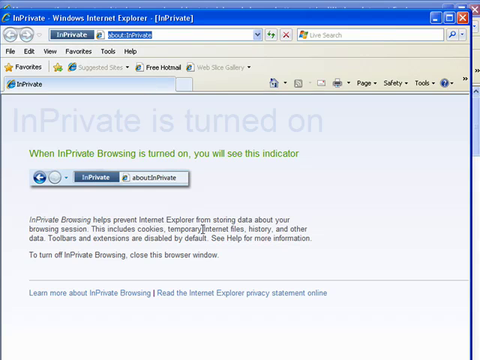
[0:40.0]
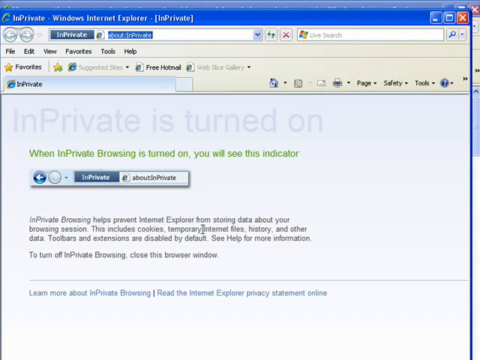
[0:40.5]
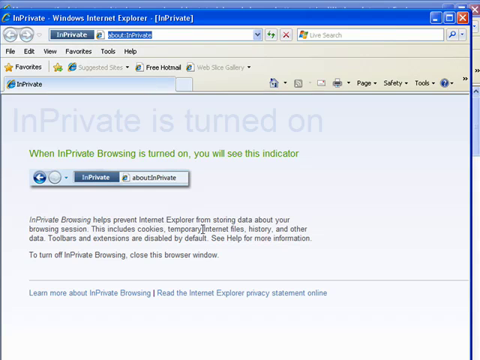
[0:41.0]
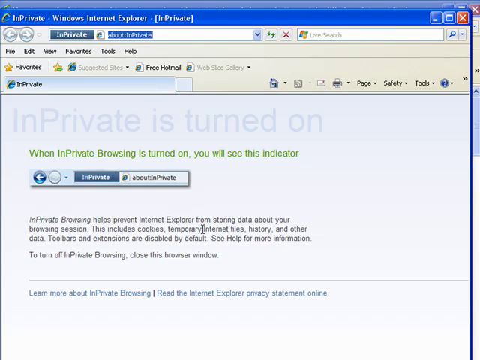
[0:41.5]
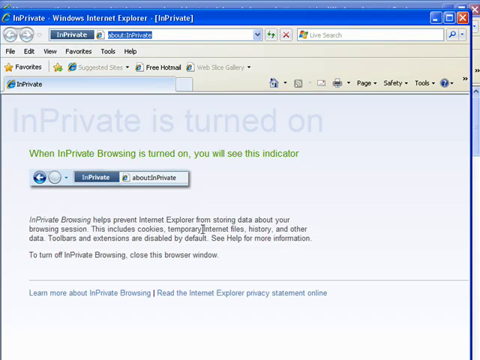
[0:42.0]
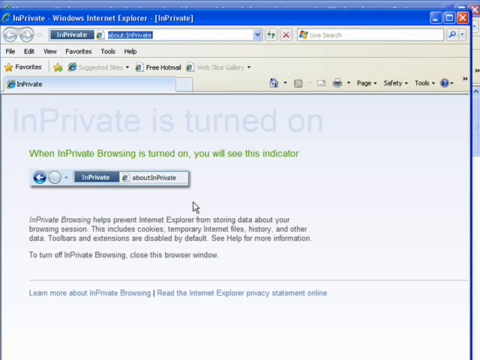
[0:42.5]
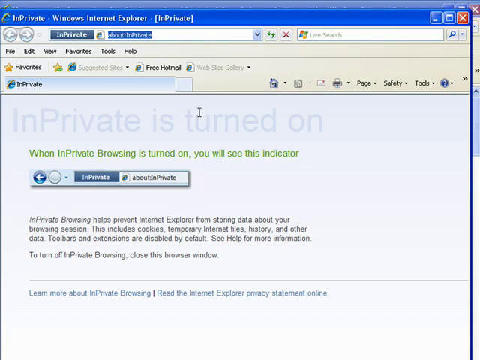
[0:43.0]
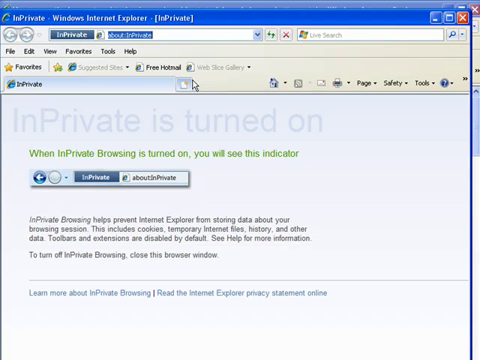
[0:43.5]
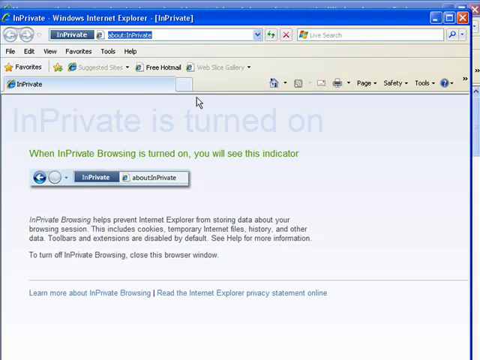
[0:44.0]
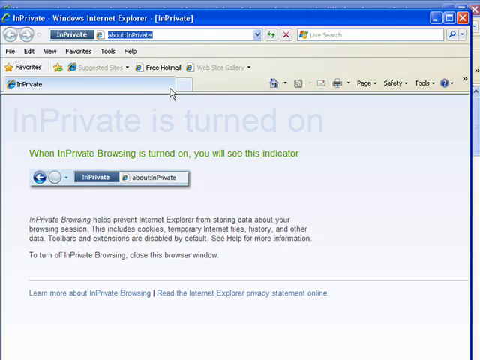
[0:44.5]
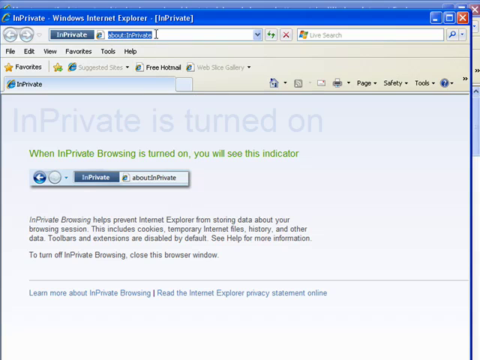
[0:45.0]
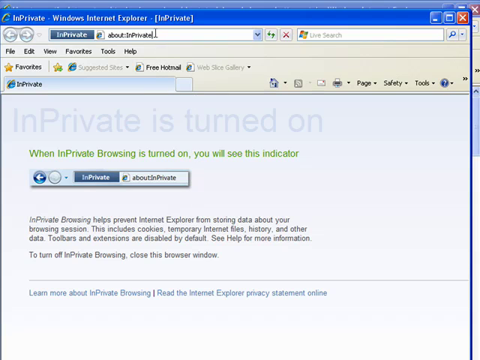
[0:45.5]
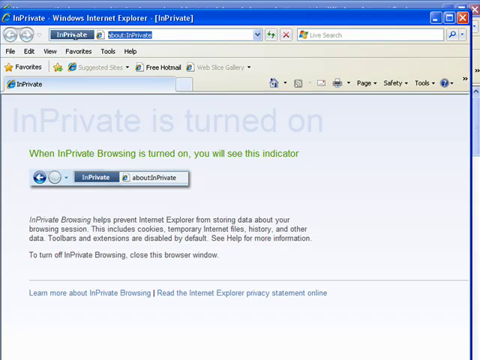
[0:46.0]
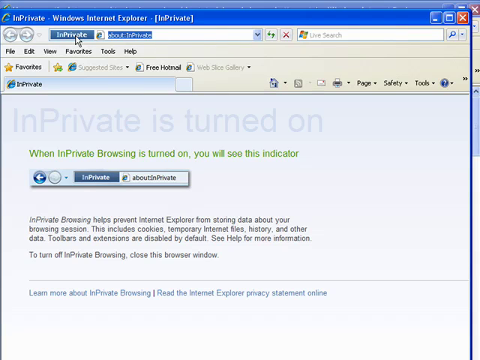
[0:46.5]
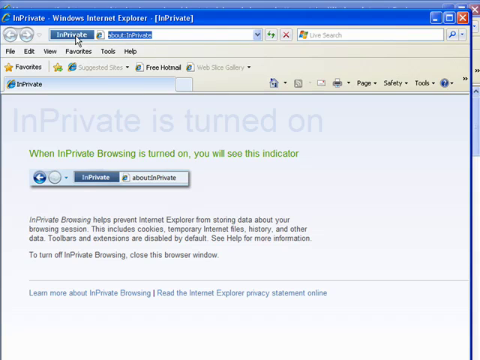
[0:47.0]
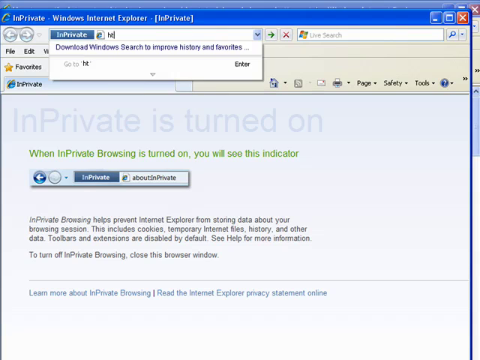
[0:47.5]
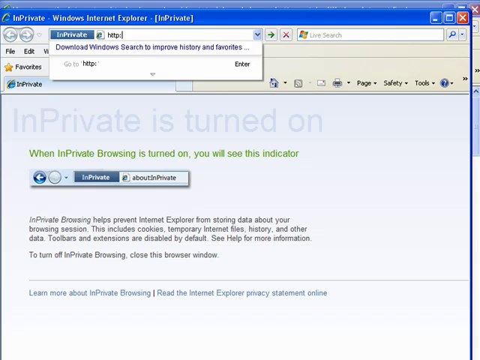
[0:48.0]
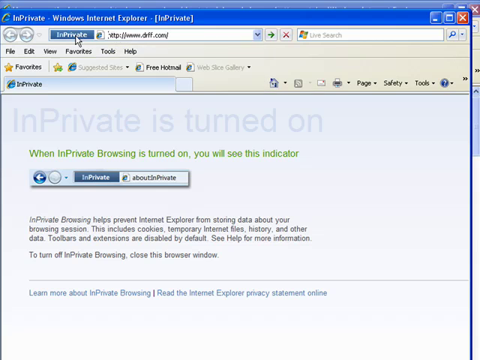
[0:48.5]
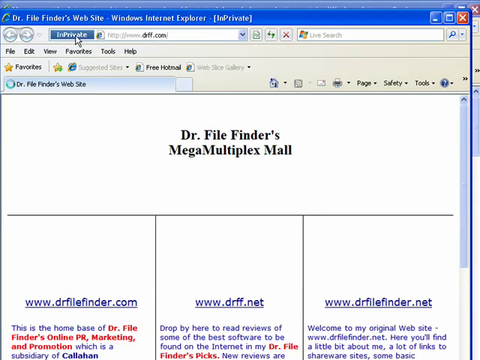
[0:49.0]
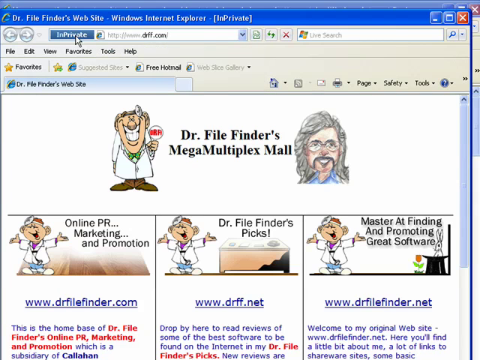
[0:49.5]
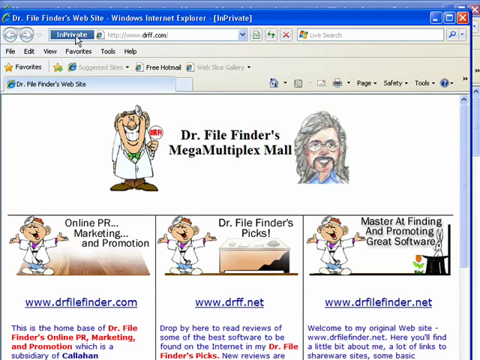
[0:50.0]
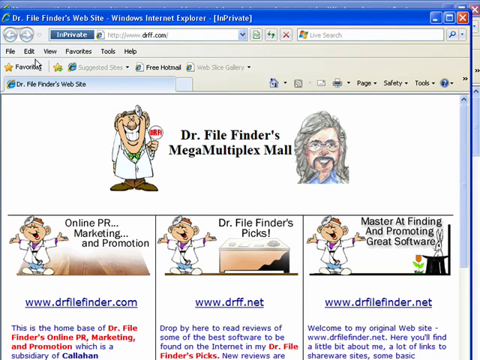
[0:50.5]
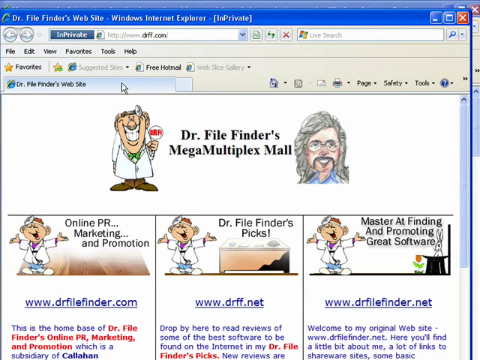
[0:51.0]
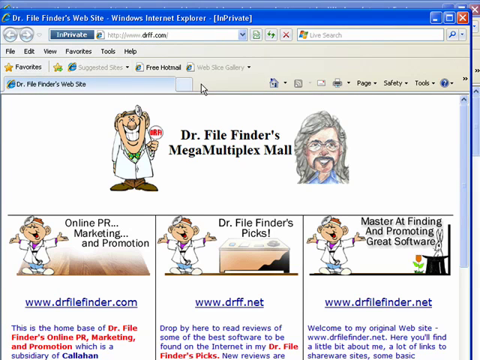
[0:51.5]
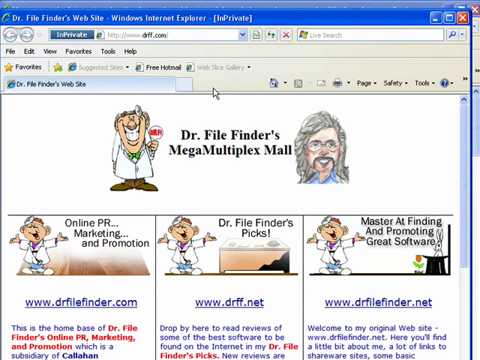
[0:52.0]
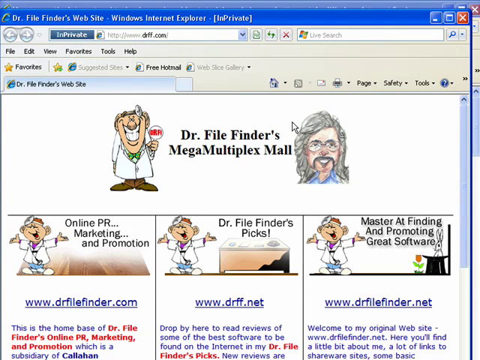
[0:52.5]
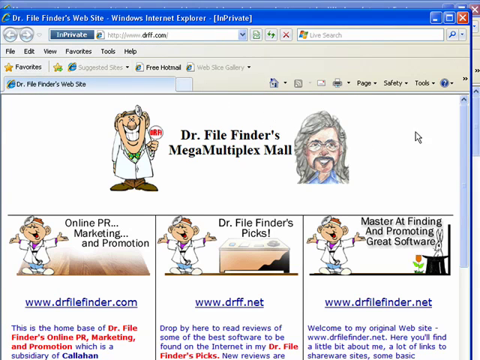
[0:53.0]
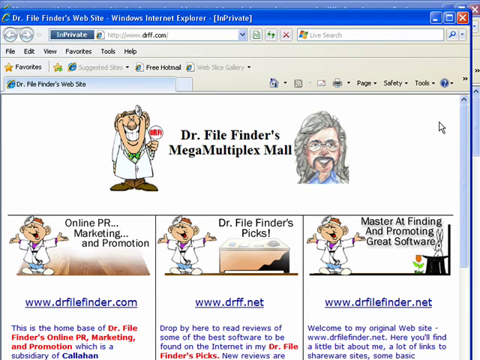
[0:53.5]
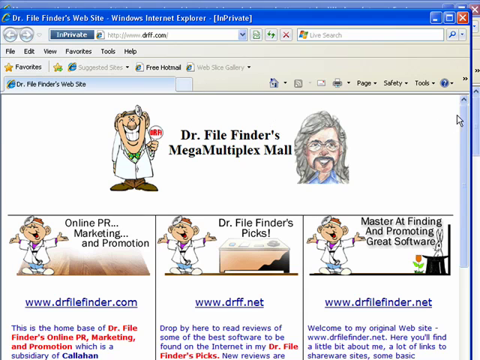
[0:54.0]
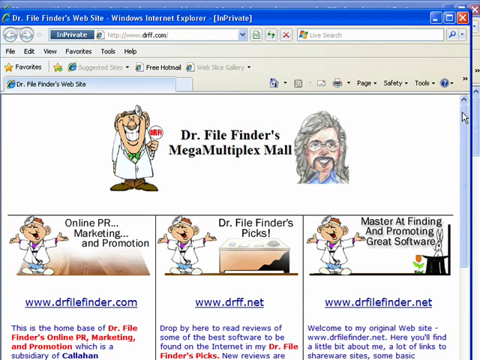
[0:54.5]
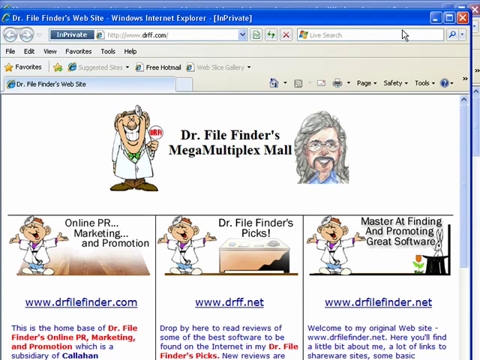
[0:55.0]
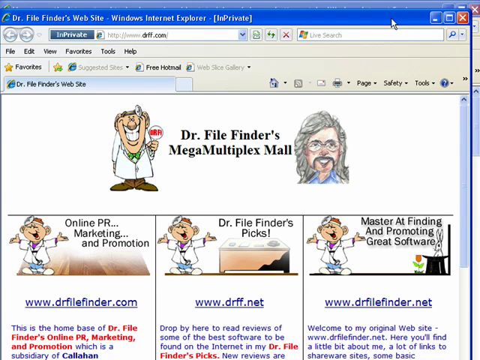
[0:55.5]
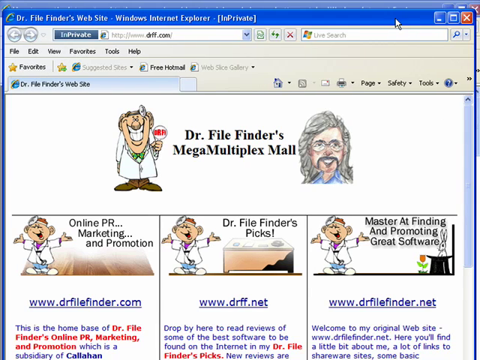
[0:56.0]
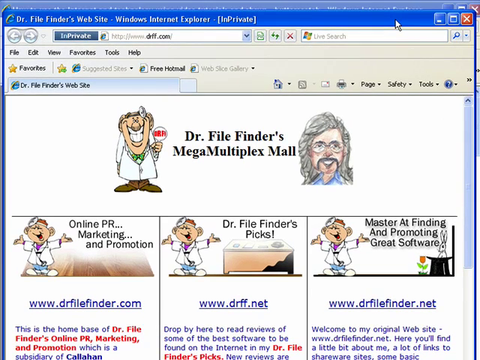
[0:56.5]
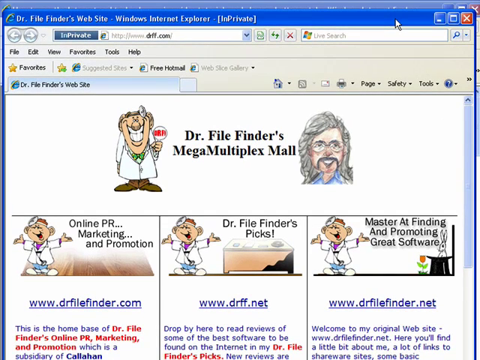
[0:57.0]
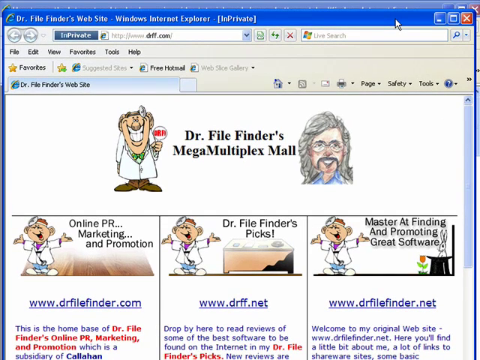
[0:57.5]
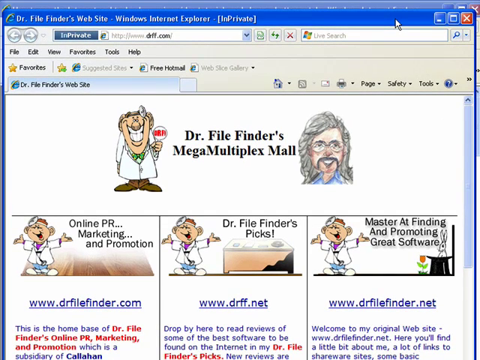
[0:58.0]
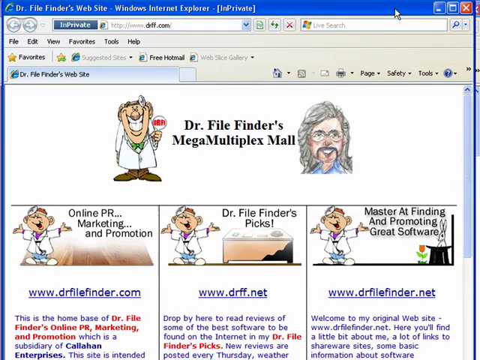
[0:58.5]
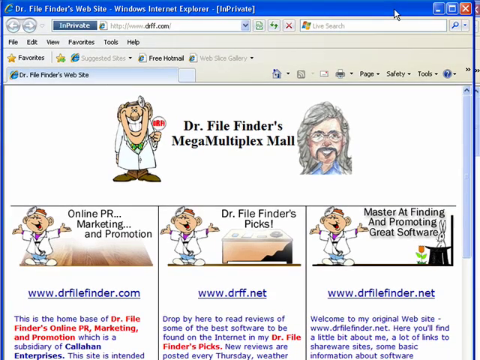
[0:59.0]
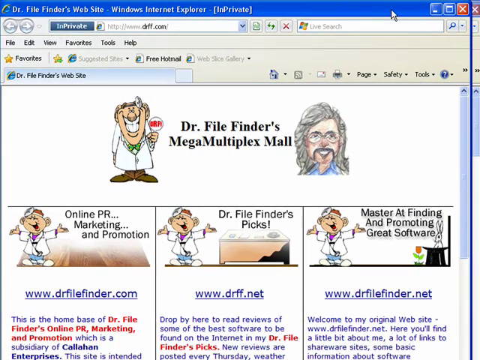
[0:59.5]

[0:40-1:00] In the InPrivate Windows Internet Explorer window, the web page reads "InPrivate is turned on." It says "When InPrivate browsing is turned on, you will see this indicator," next to a snippet of the top of the browser window showing a small "InPrivate" label. The page goes on: "InPrivate browsing helps prevent Internet Explorer from storing data about your browsing session. This includes cookies, temporary Internet files, history, and other data. Toolbars and extensions are disabled by default. See help for more information. To turn off InPrivate browsing, close this browser window." The cursor then goes up to the search bar and searches for drff.com.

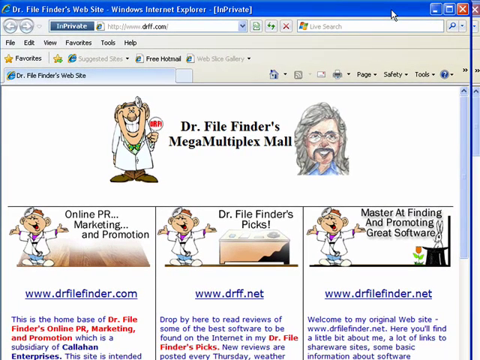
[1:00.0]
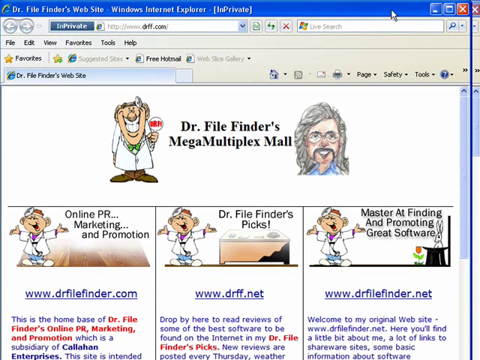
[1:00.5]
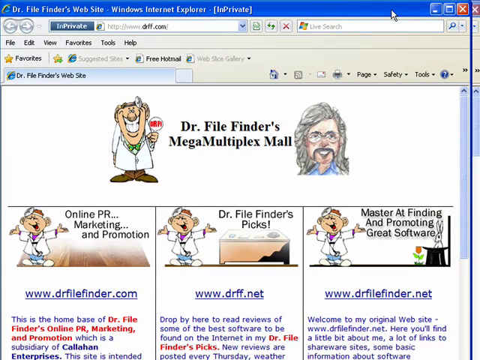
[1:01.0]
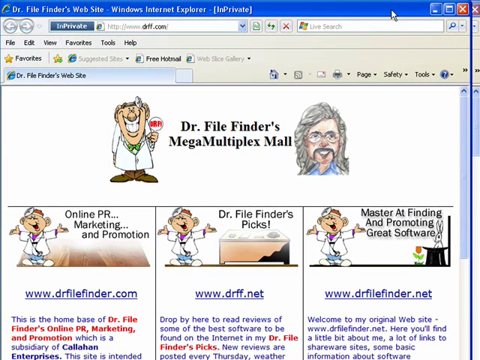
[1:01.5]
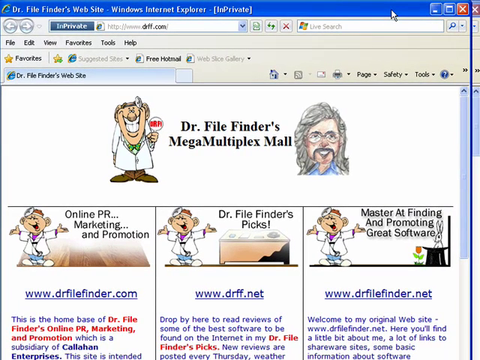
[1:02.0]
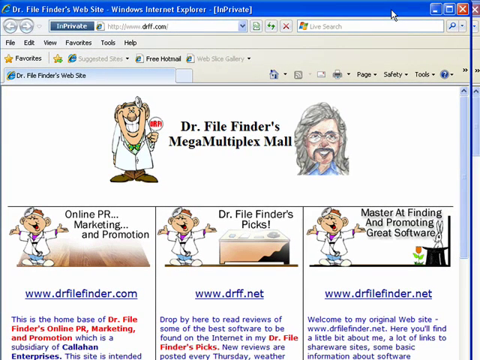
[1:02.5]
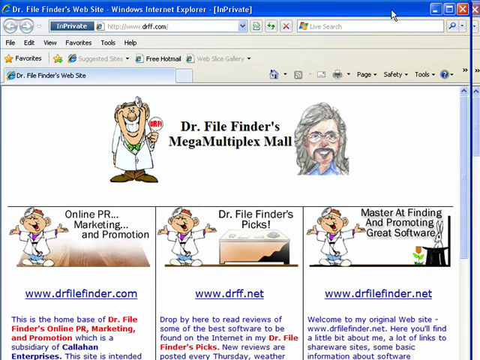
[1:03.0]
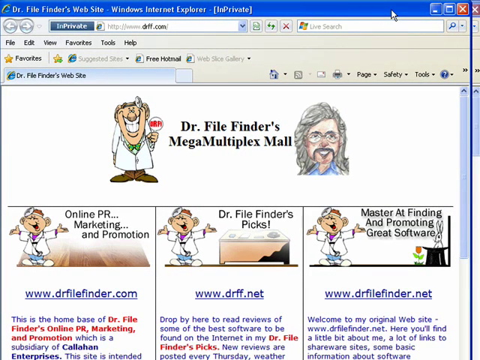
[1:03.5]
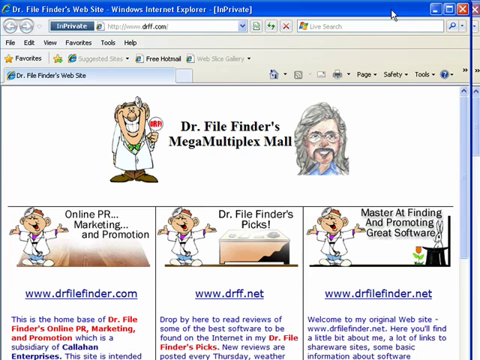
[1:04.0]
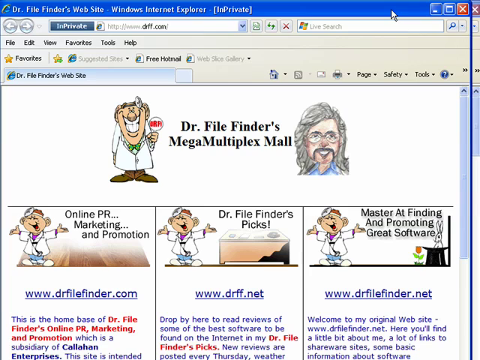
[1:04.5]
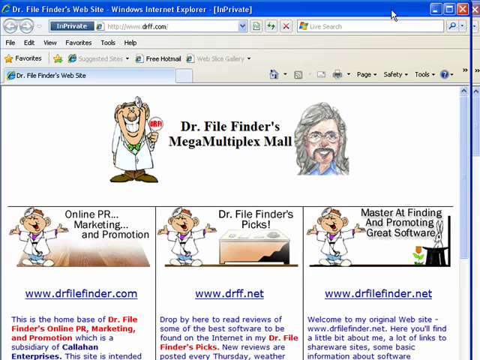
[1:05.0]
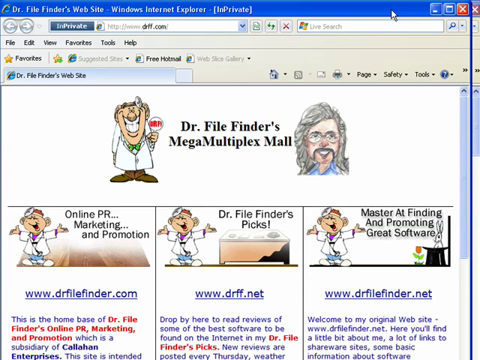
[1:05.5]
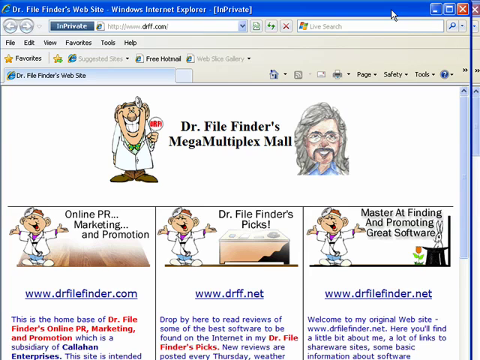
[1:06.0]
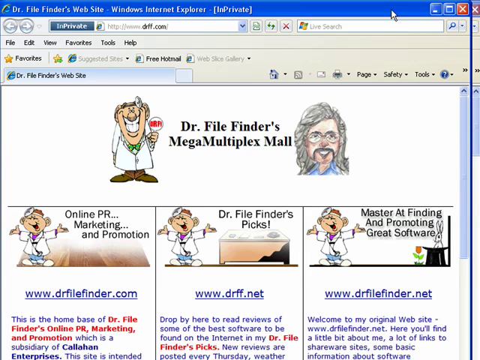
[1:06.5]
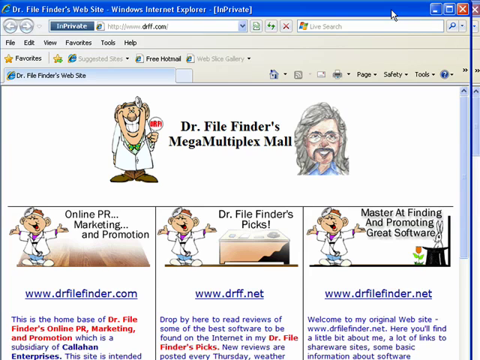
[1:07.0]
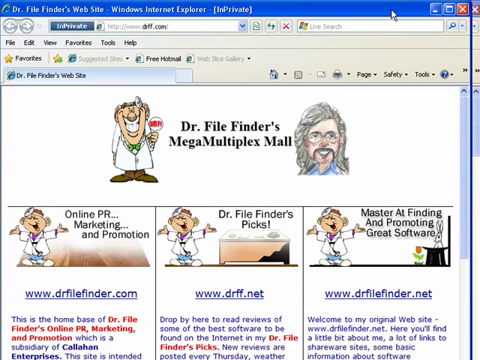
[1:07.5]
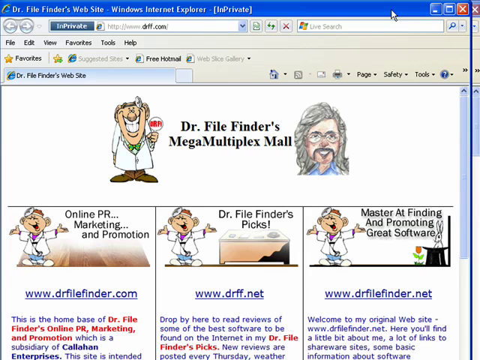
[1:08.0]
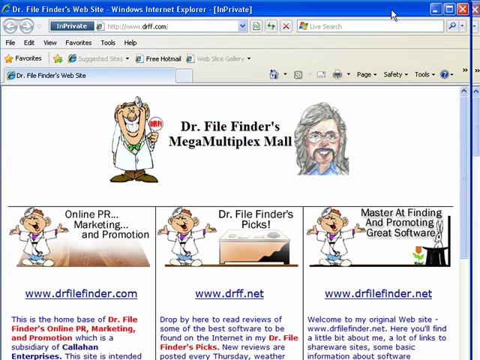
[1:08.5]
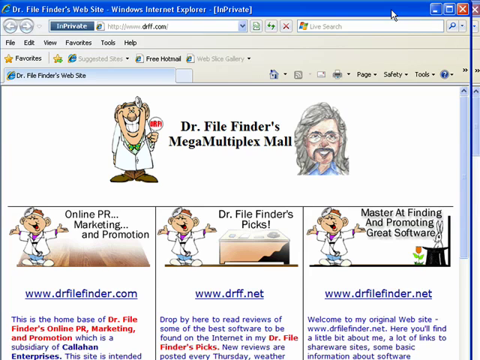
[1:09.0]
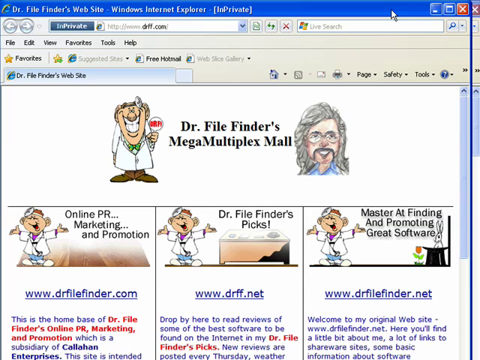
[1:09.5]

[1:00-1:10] The InPrivate browser is on screen, identifiable by the InPrivate label at the top next to the search bar, just to the left of it. The browser is on drff.com, which shows a couple of different animations or cartoons. The website's header reads "Dr. File Finder's mega multiplex mall," with a cartoon drawing of a guy with long gray hair and a gray handlebar mustache. Below are "online PR, marketing and promotion, drfilefinder.com," then "Dr. File Finder's picks" and "master at finding and promoting great software." The cursor is no longer moving, so this apparently might be the end of the tutorial.